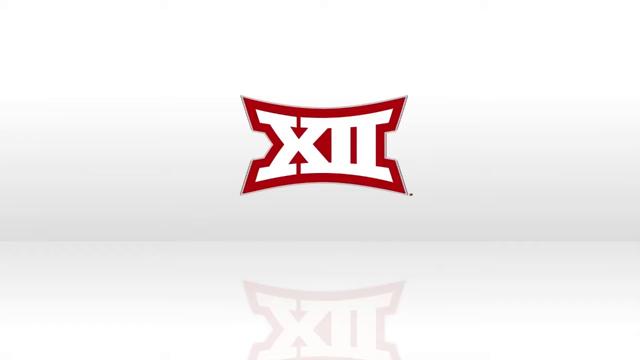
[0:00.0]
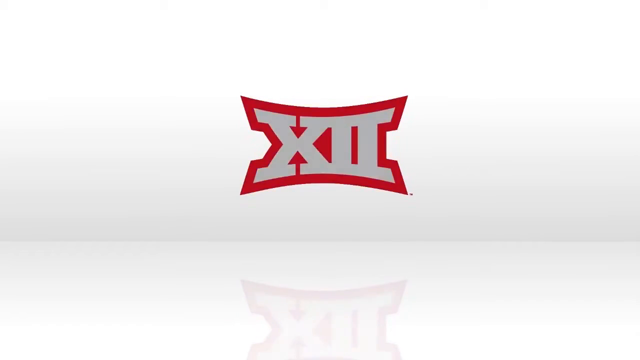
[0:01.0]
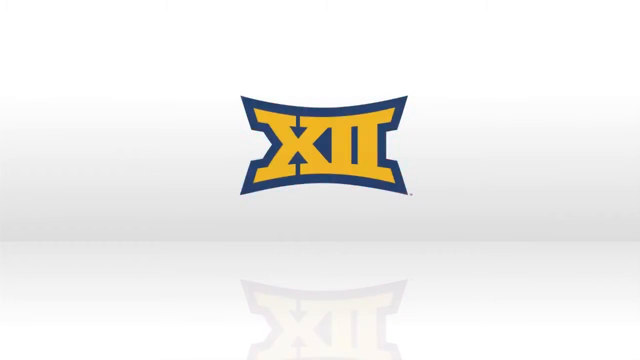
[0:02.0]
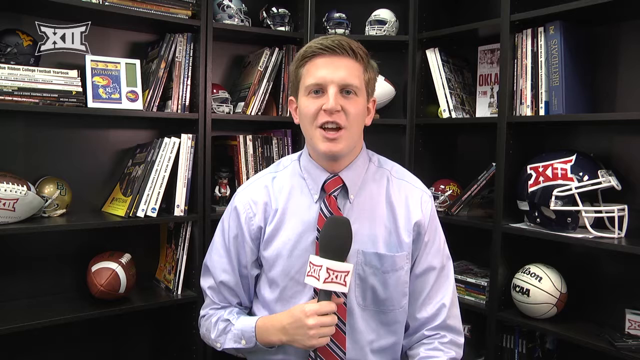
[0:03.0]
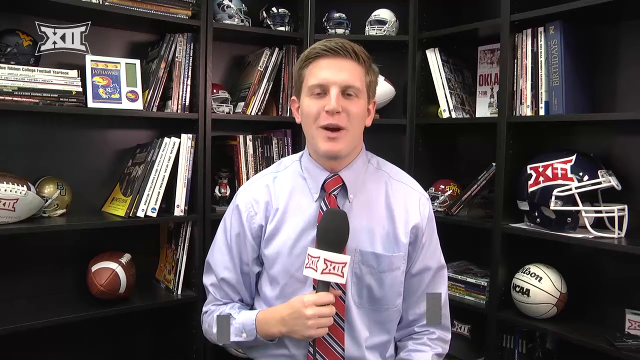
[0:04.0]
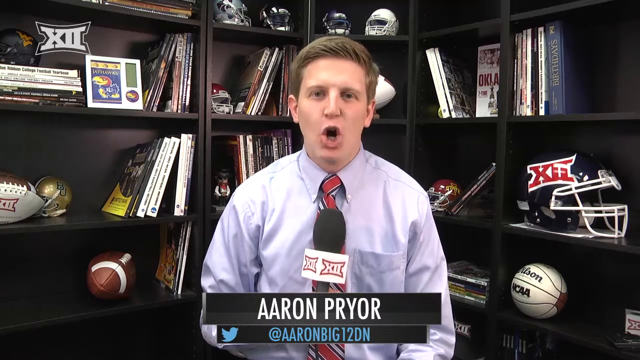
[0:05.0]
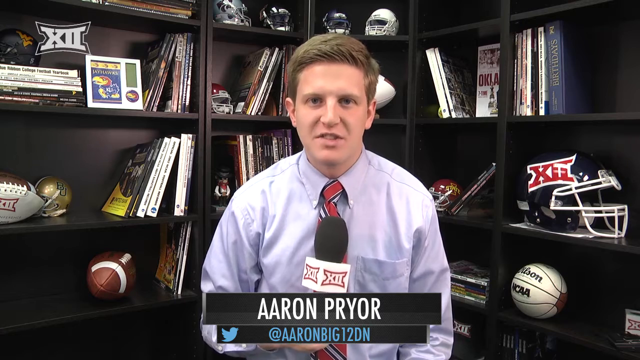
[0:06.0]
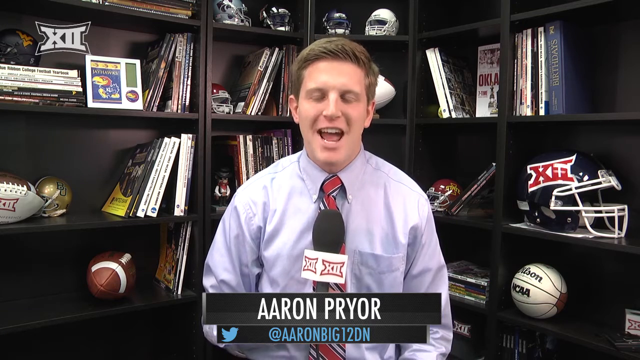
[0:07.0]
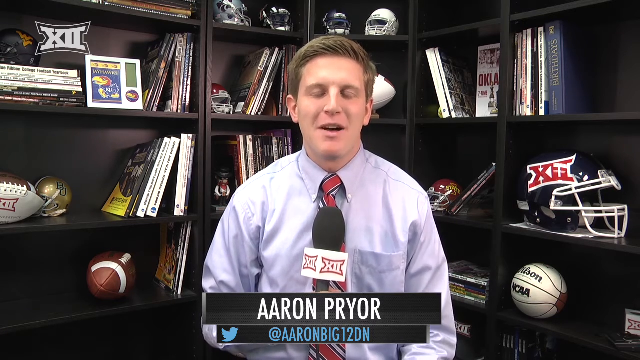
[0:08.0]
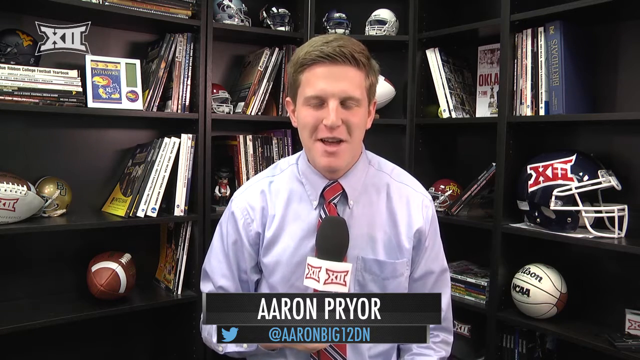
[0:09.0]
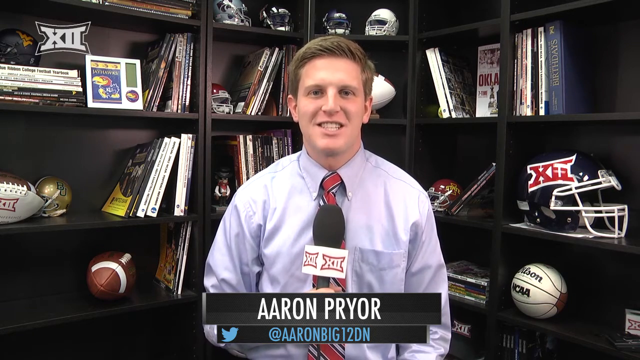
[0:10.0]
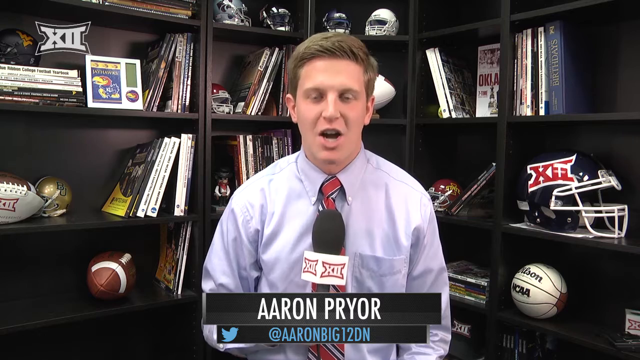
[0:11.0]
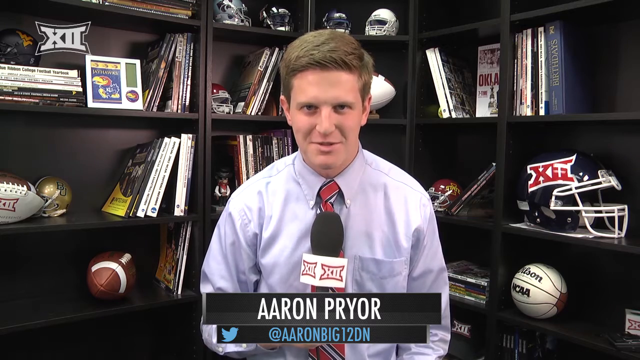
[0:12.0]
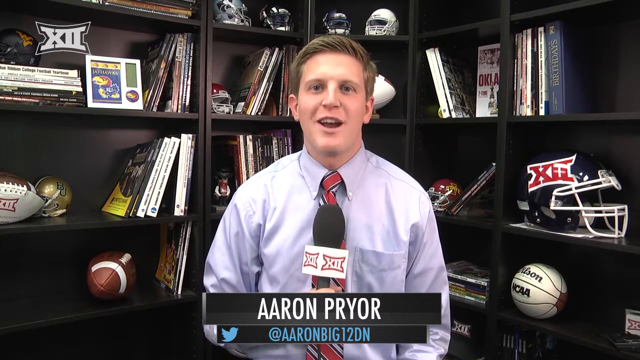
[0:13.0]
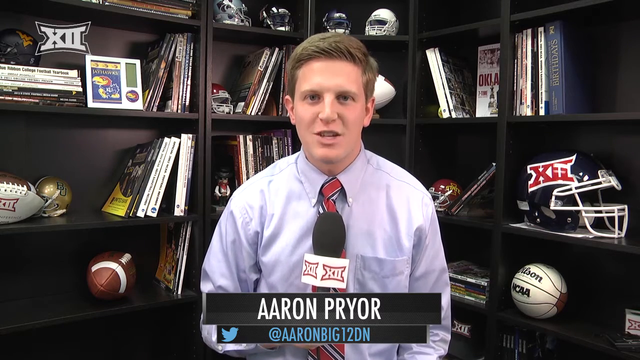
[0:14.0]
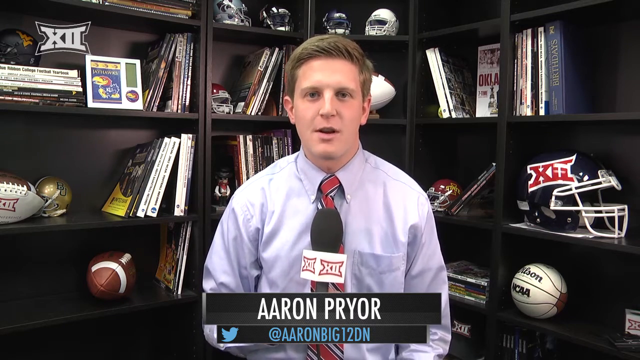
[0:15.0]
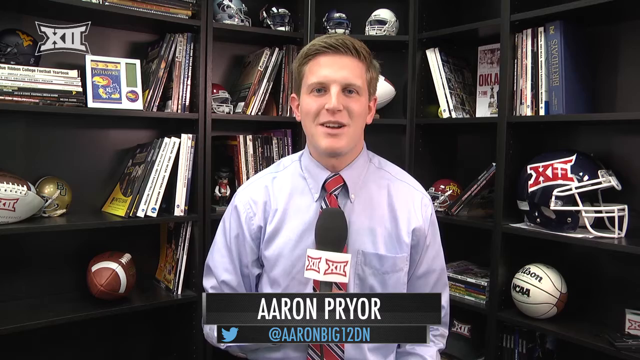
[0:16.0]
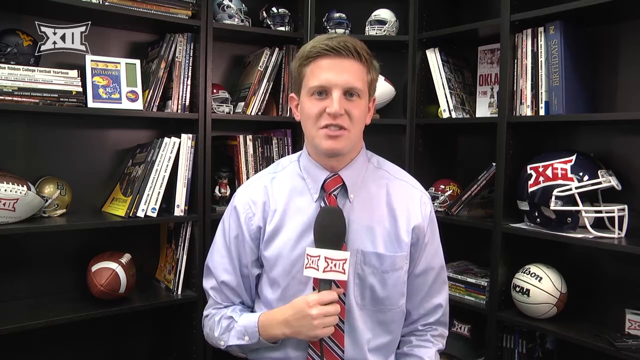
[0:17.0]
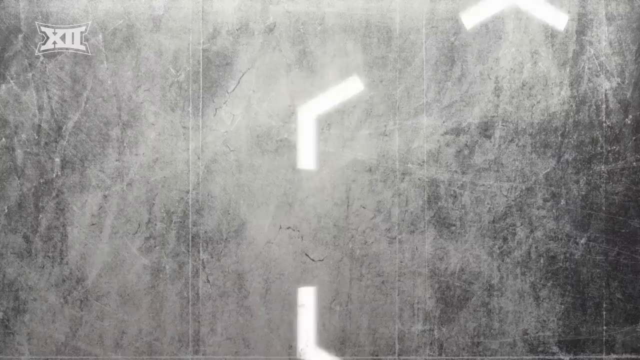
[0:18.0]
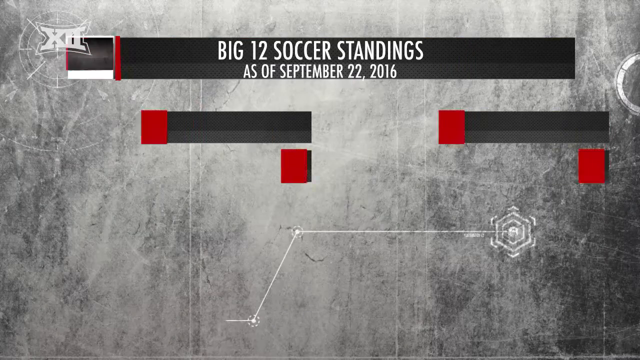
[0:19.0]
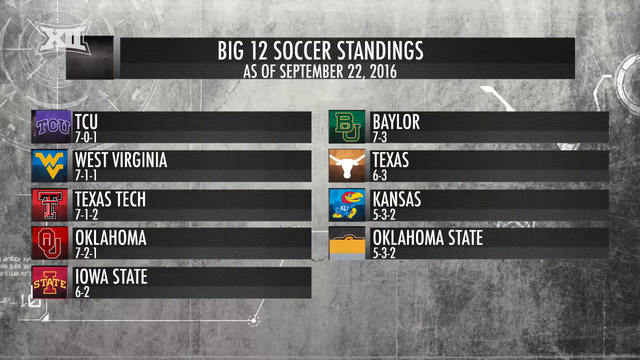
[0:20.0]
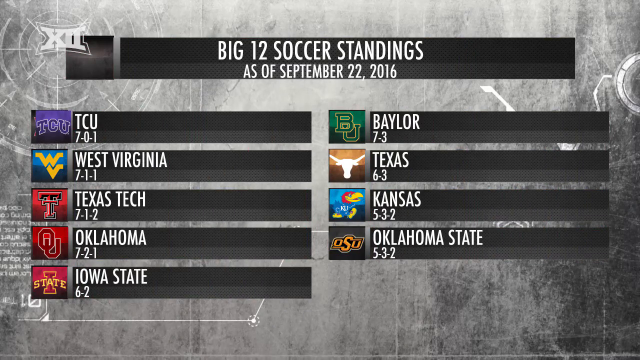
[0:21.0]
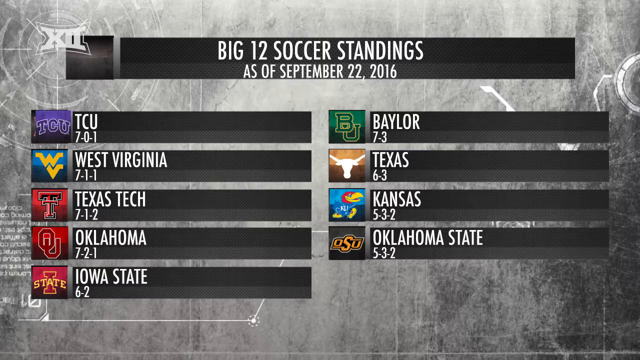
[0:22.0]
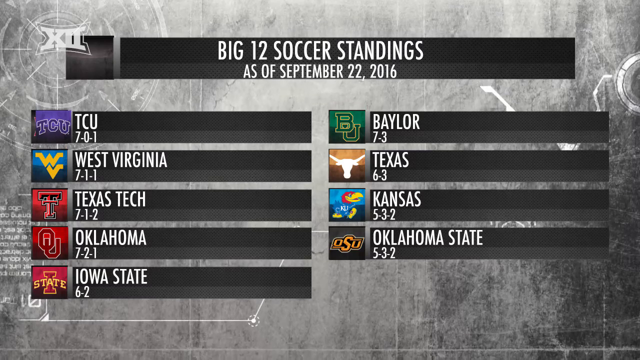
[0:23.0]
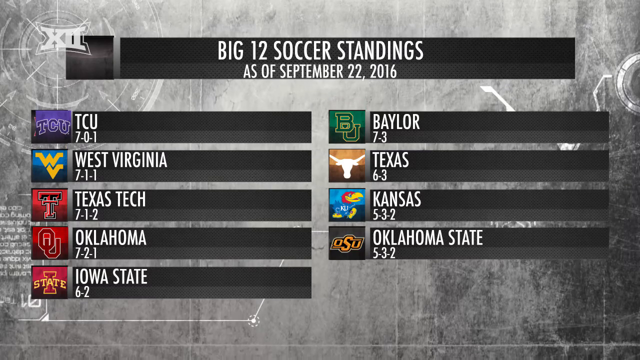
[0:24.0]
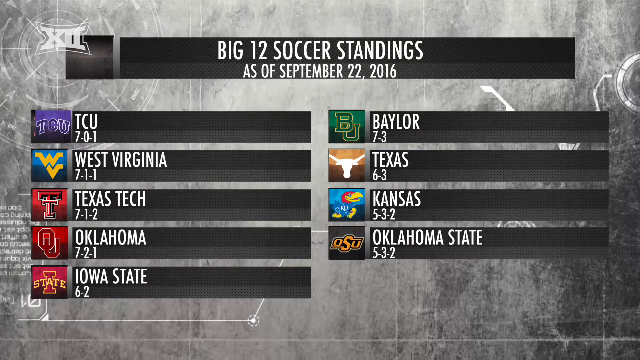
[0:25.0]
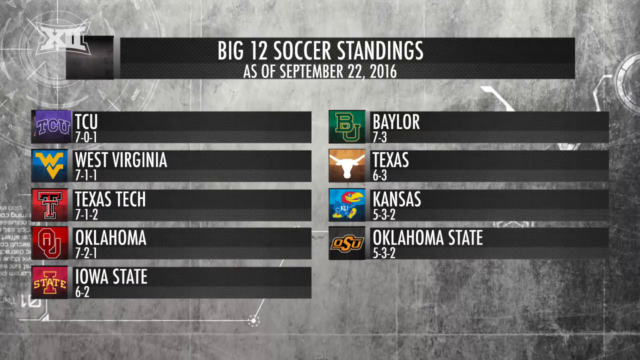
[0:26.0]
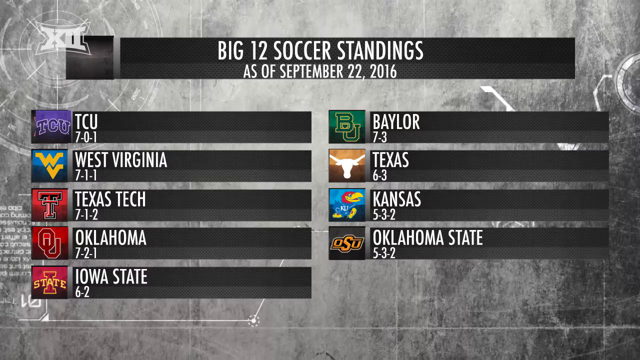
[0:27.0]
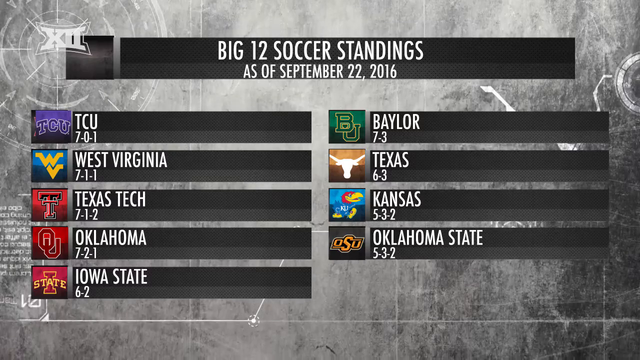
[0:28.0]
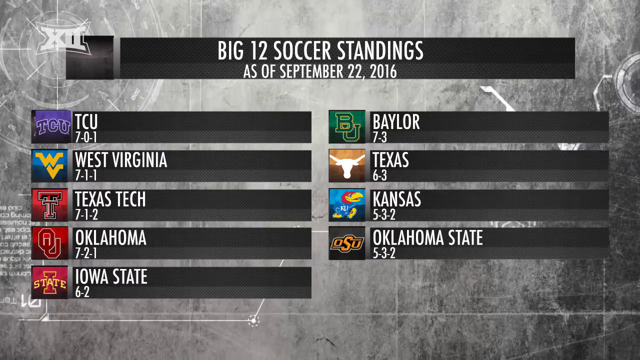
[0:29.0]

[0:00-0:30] The video opens on a white background, then text reading "X11" appears, apparently meant as the Roman numeral 12; it is mostly white with a red outline. It then changes to different colors such as blue, white, black and yellow. A man named Aaron Pryor appears, holding a microphone in his right hand while facing the camera. He wears a button-down collared shirt that looks light blue, though it may actually be white with the lighting making it look blue. He is standing in front of several bookshelves that look like a corner bookshelf. On the right side is "NCAA basketball" in white, and above it is something like a helmet that says "X11", apparently the name of the business he works for. Text then reads "Big 12 soccer standards as of September 22, 2016", listing TCU, West Virginia, Texas Tech, Oklahoma, Iowa State, Baylor, Texas, Kansas State and Oklahoma State.